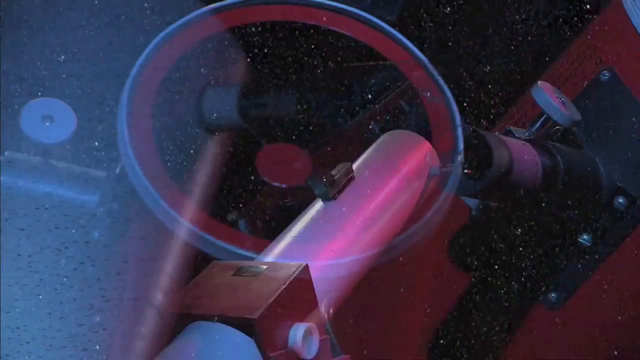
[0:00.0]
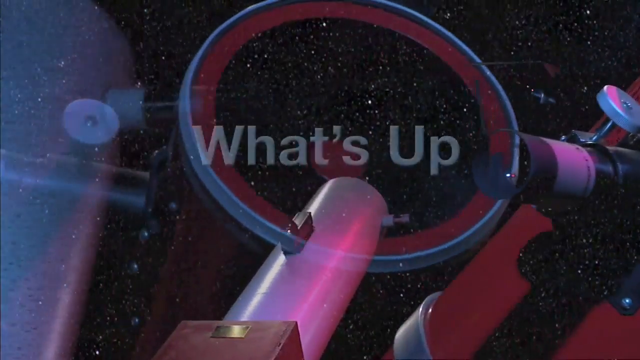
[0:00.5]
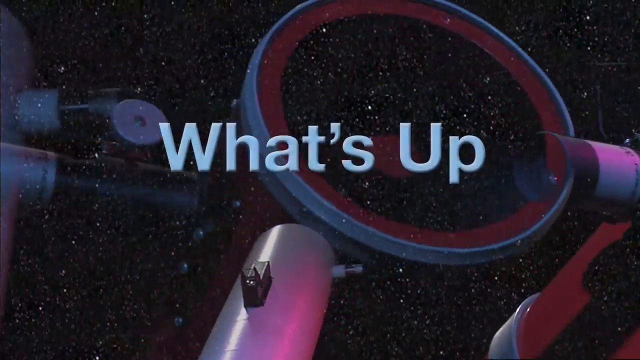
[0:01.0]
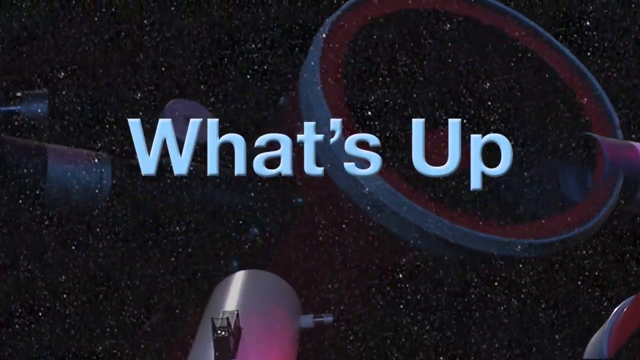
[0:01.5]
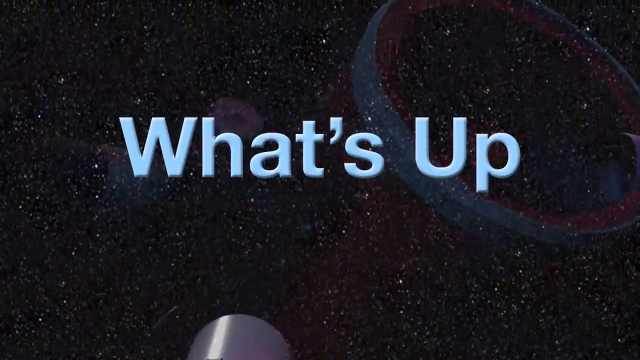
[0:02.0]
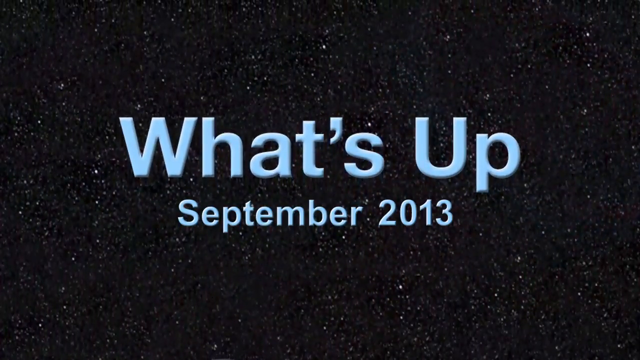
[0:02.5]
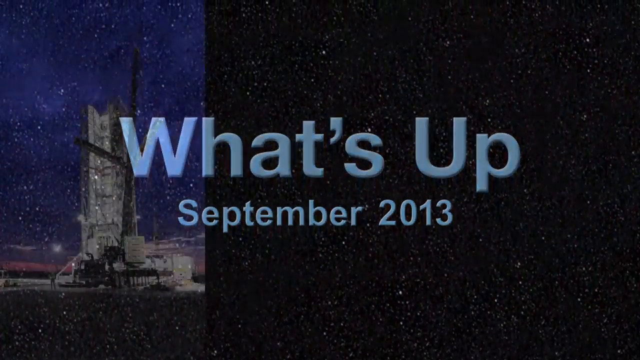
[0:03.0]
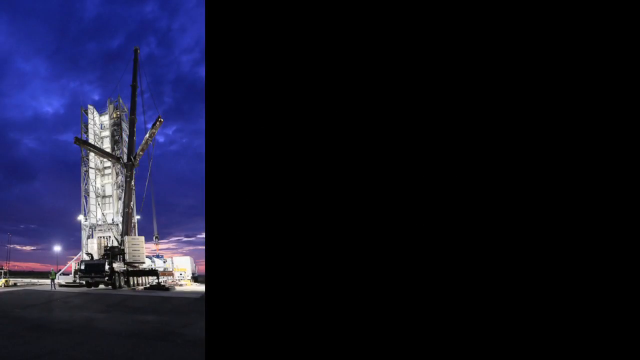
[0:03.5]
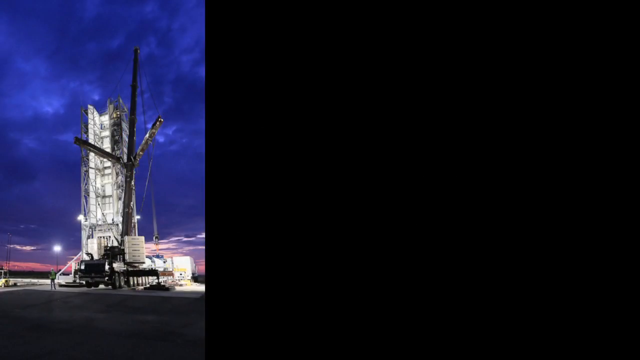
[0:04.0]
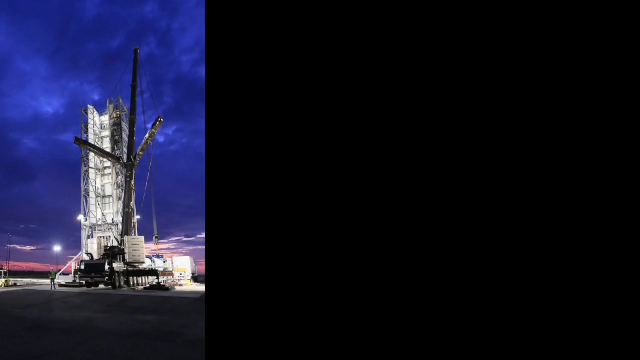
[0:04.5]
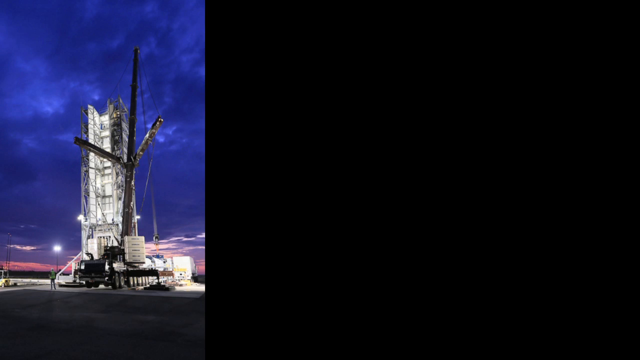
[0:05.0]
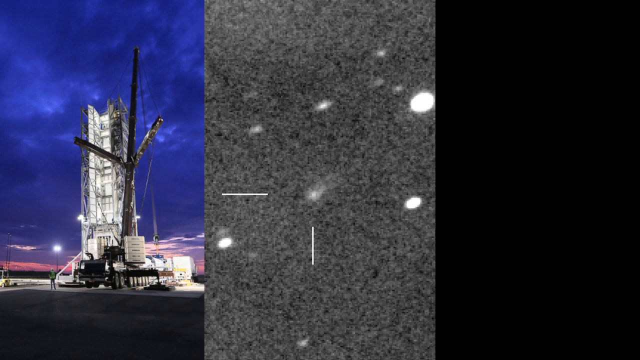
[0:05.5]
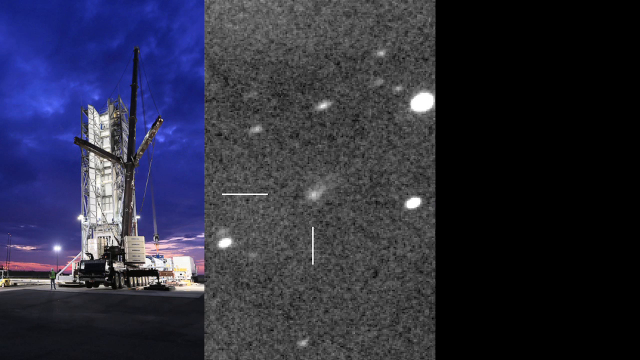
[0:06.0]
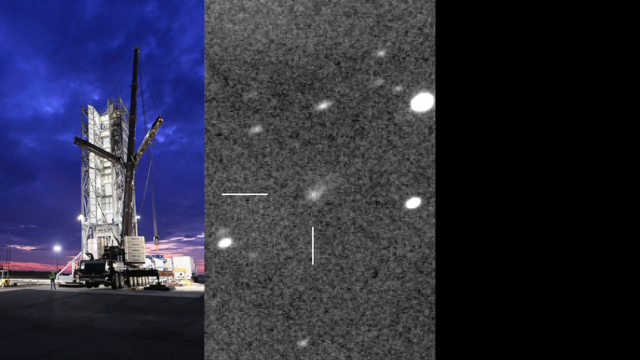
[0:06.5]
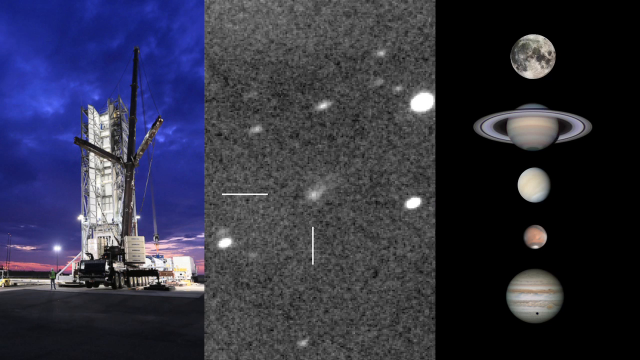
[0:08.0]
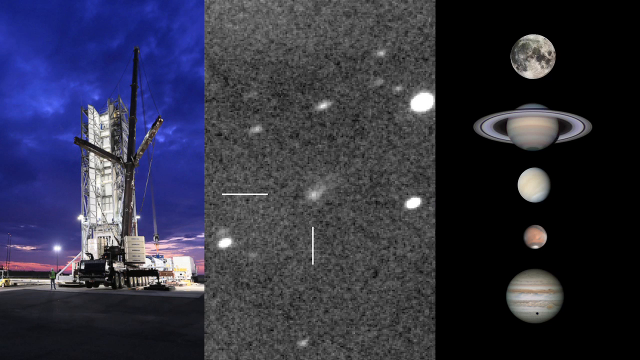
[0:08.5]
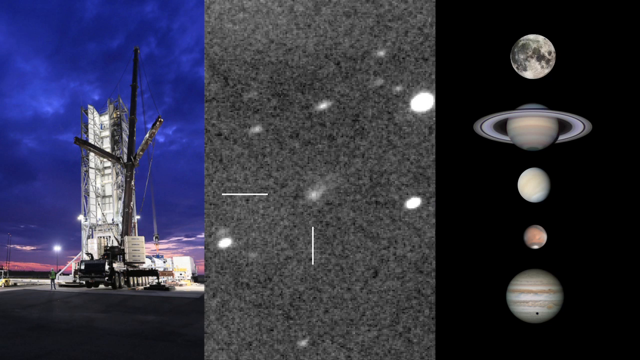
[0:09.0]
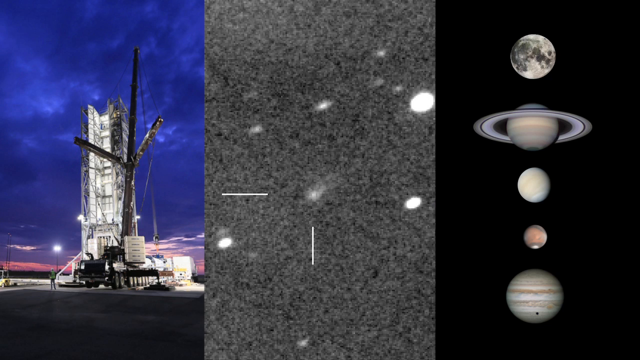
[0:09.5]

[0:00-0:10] Computer-generated outer space is shown, with a few different things, such as satellites and telescopes, passing each other in the sky. Text reads "what's up September 2013". Three pictures then appear: the one on the left looks like Cape Canaveral, where rockets blast off; the middle picture is very grainy and shows what looks like UFOs; the picture on the right shows planets: Jupiter, Mars, Venus, Saturn and Earth.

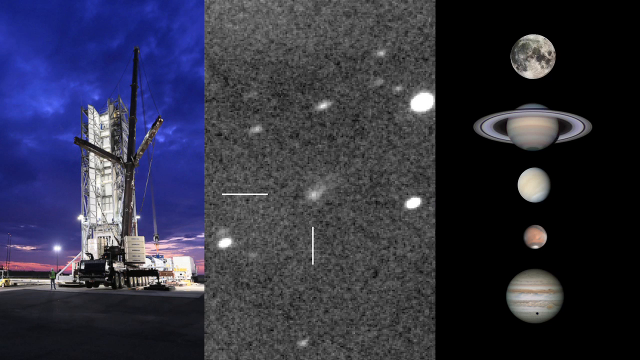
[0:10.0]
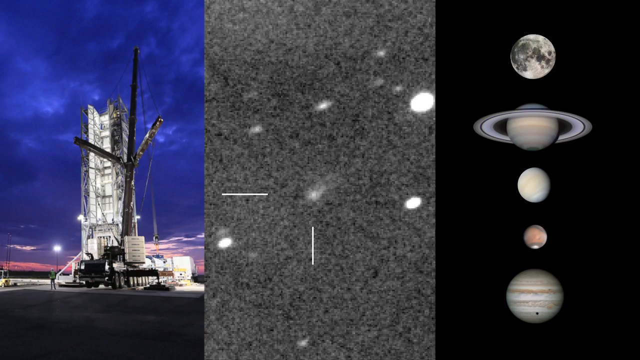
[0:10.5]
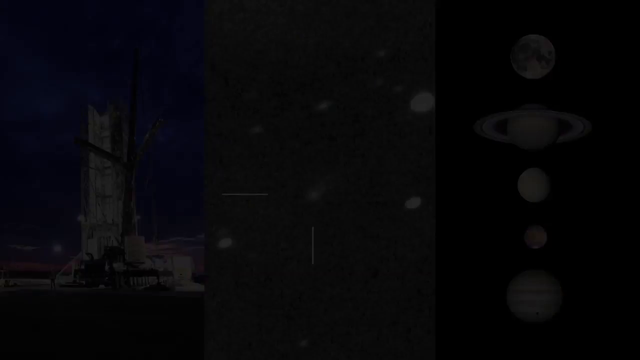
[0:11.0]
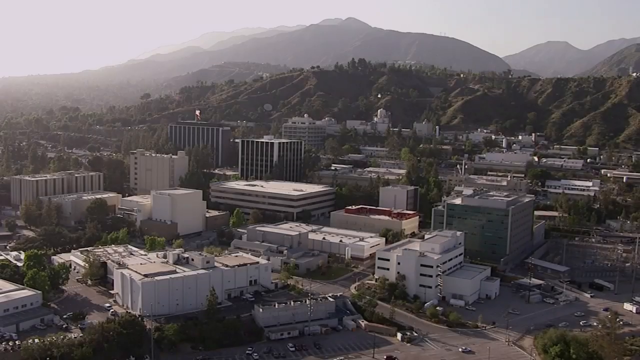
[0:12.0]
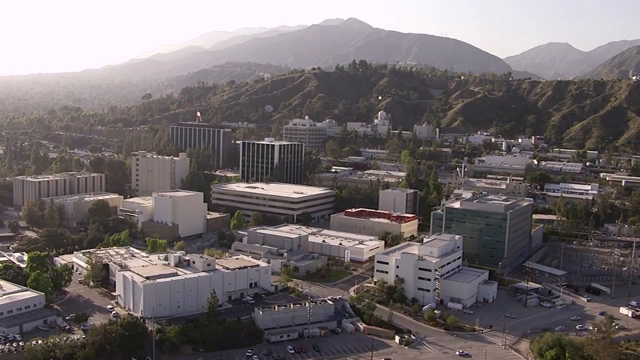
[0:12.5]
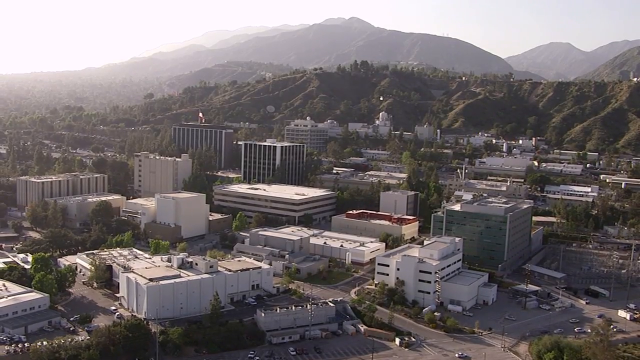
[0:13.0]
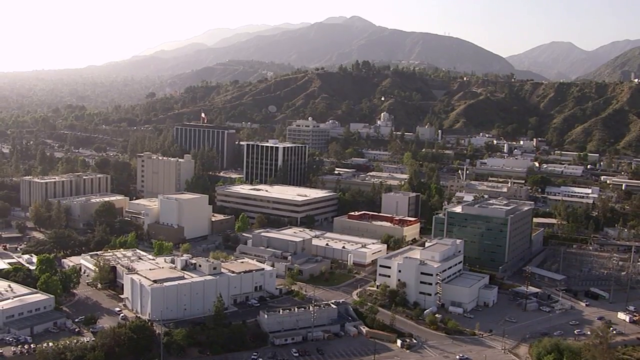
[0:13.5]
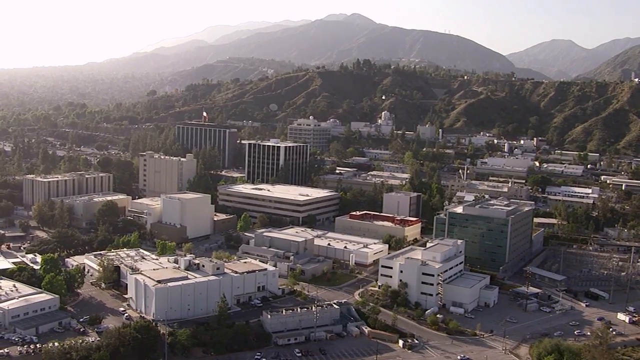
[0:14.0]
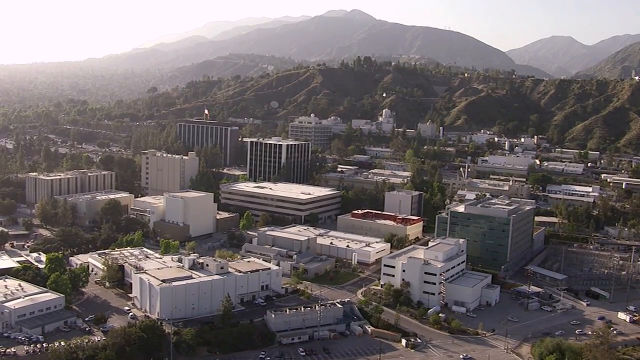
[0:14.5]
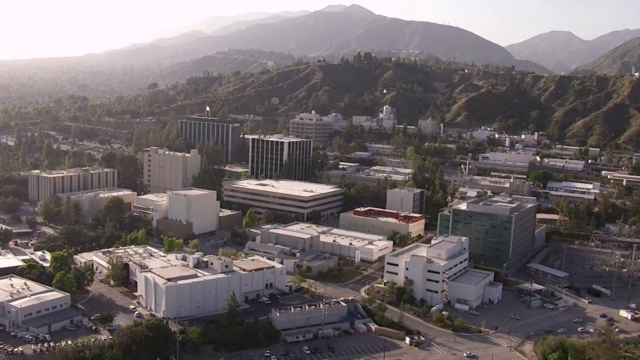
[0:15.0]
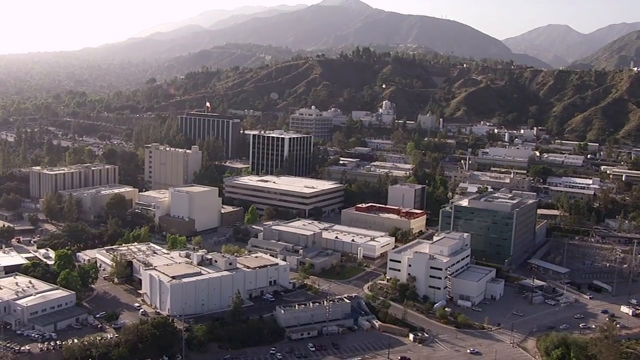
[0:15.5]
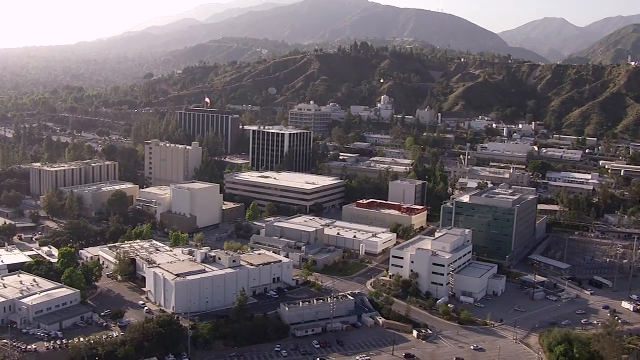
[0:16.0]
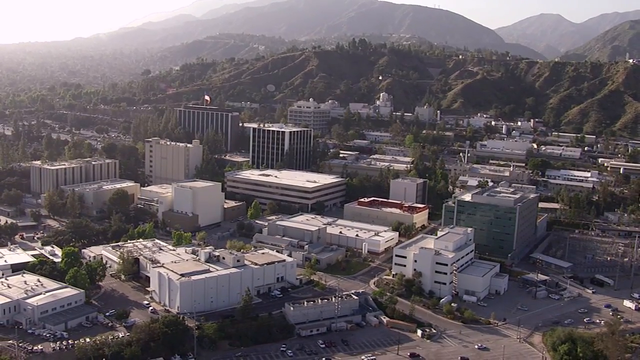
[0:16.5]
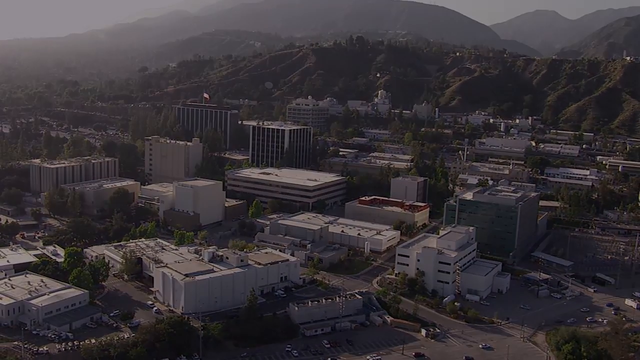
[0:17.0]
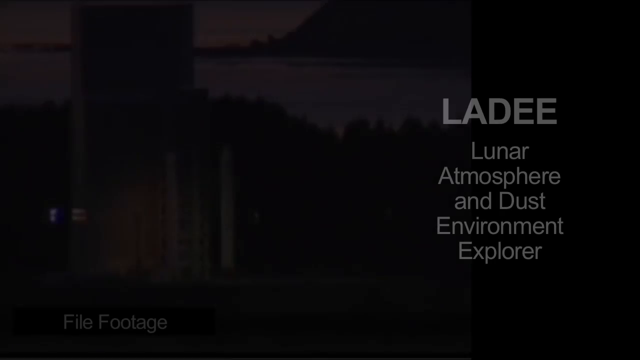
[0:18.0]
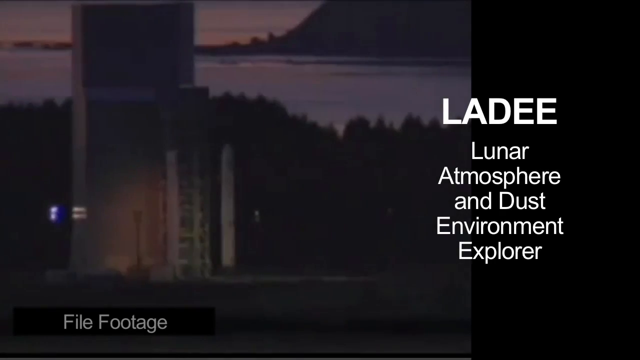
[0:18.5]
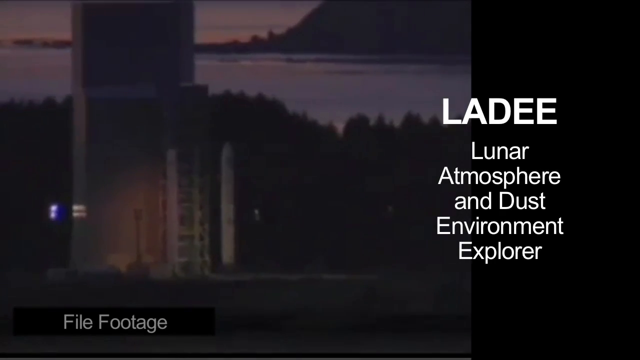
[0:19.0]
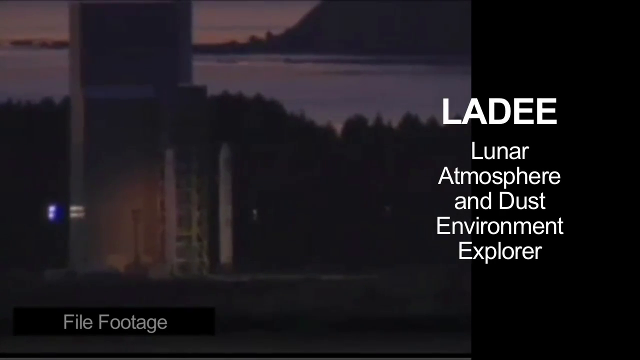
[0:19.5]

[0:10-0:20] In a video about outer space called what's up, the left picture looks like a launch pad for rockets, the middle picture is grainy and shows what looks like UFOs or something unidentifiable, and then Jupiter, Mars, Neptune, Saturn and the Earth are shown. A city appears that looks somewhat familiar, possibly in Hawaii, with the text "LADEE lunar atmosphere and dust environment explorer". The scene then appears to return to the same place from the left picture that looked like a rocket launch site.